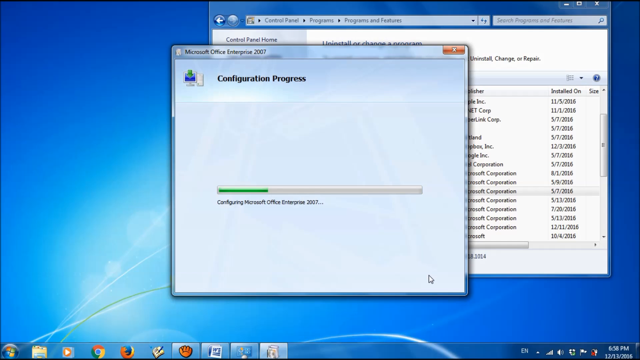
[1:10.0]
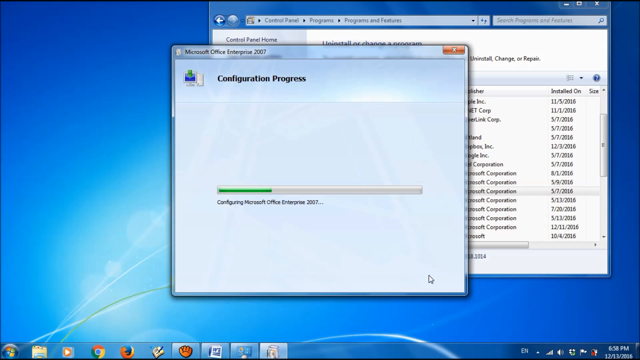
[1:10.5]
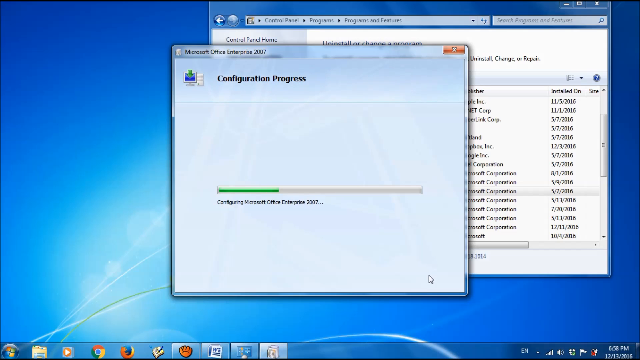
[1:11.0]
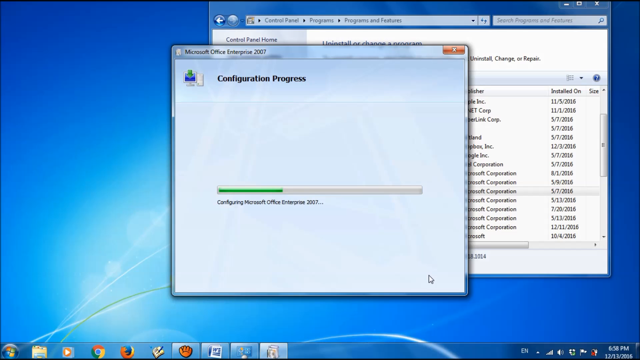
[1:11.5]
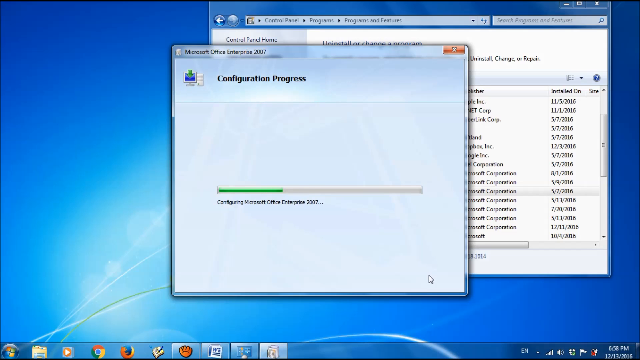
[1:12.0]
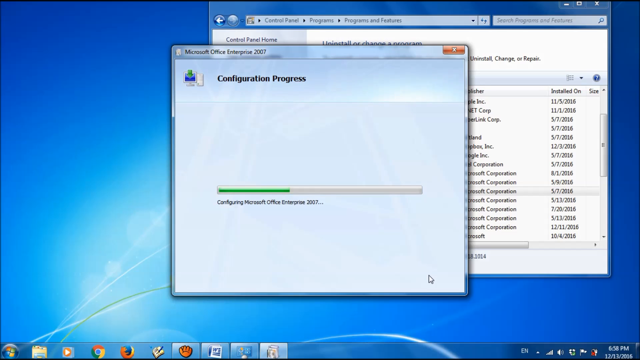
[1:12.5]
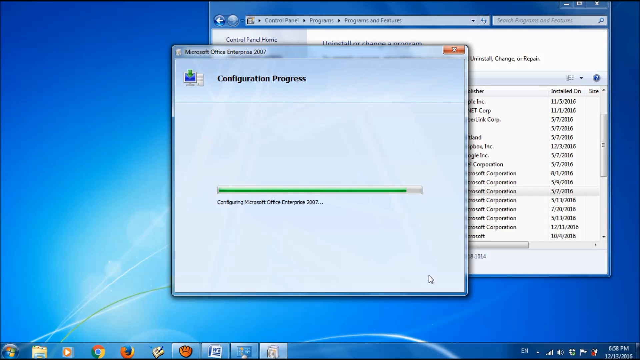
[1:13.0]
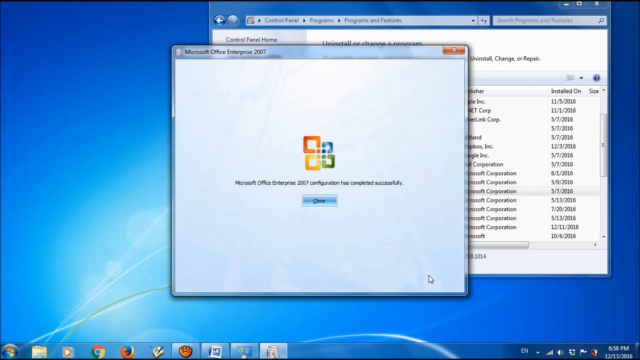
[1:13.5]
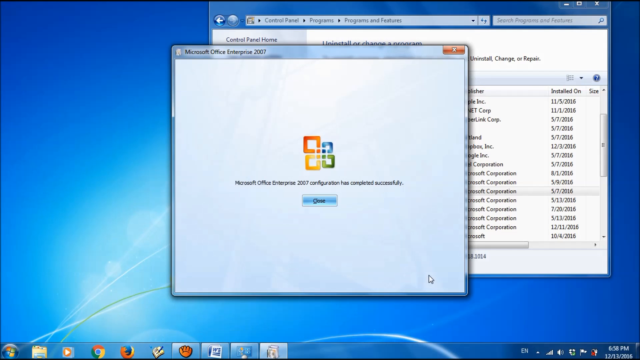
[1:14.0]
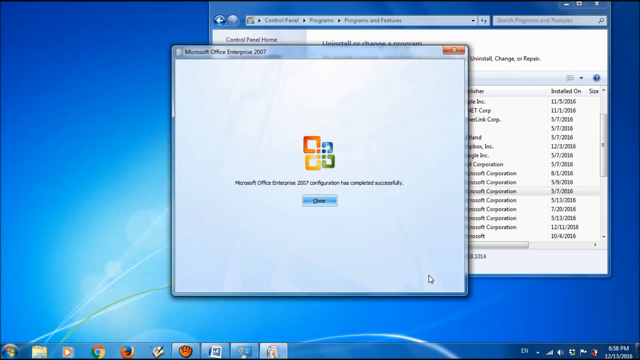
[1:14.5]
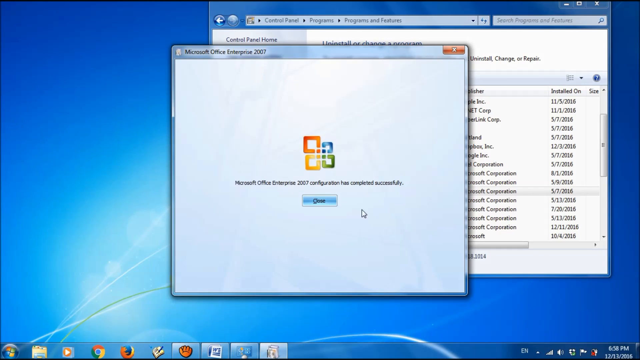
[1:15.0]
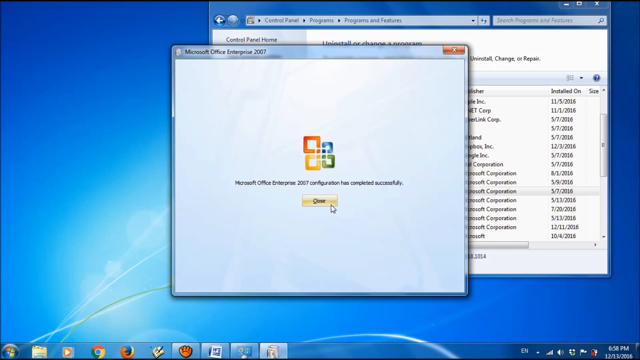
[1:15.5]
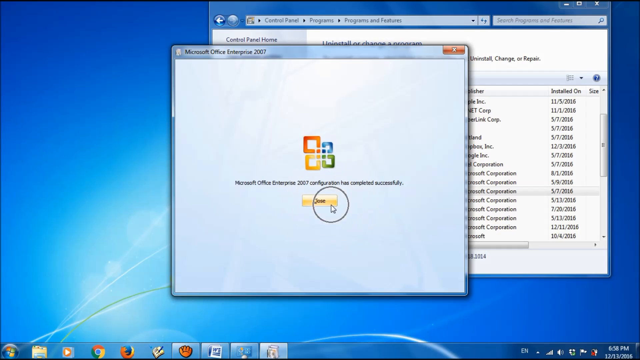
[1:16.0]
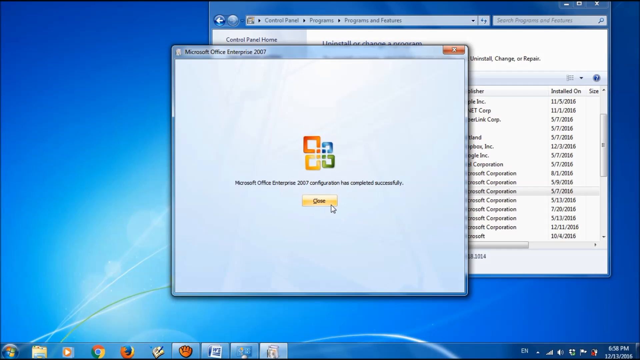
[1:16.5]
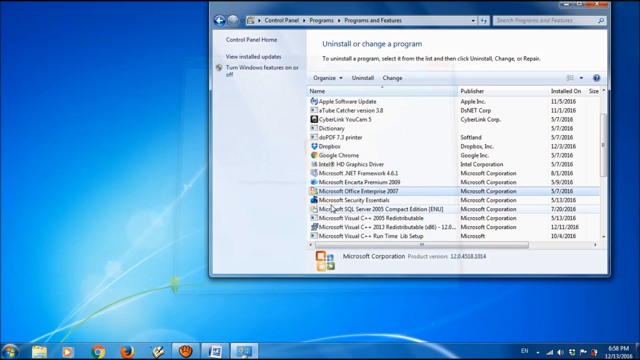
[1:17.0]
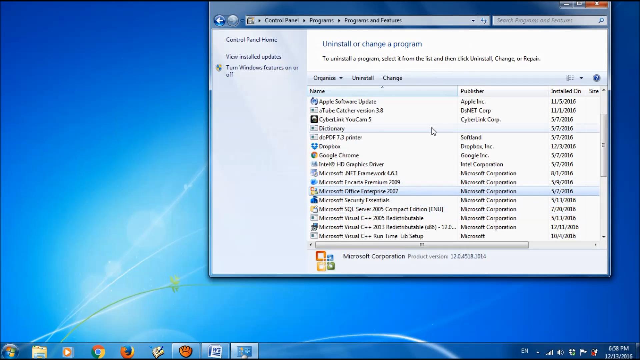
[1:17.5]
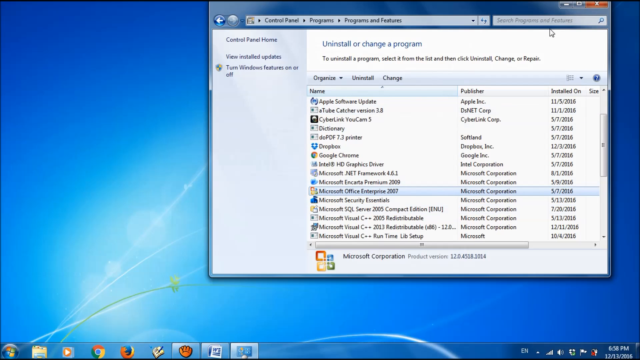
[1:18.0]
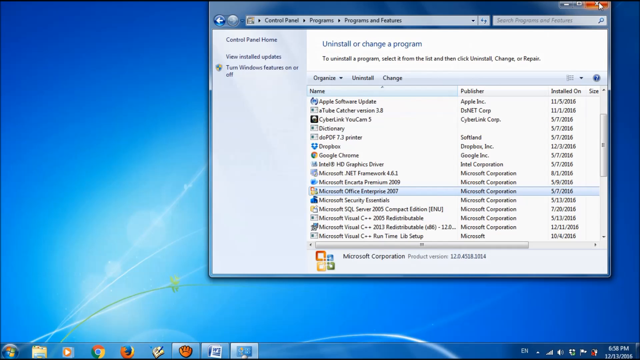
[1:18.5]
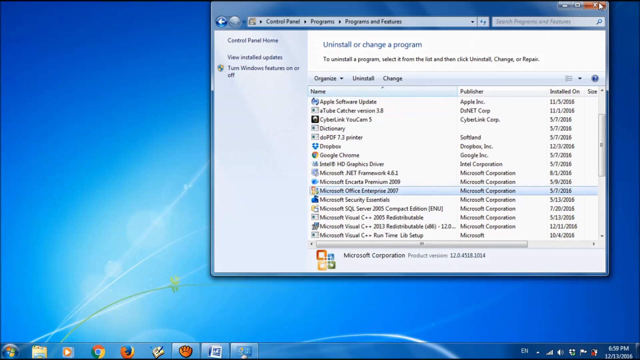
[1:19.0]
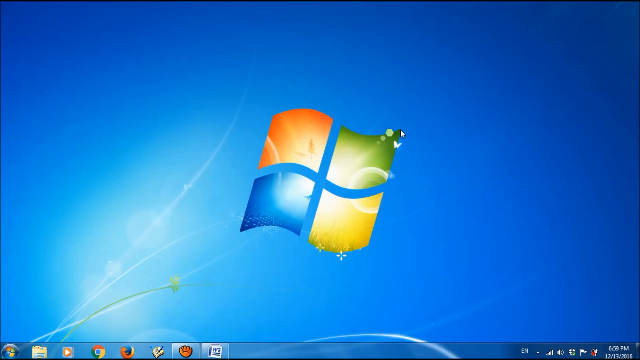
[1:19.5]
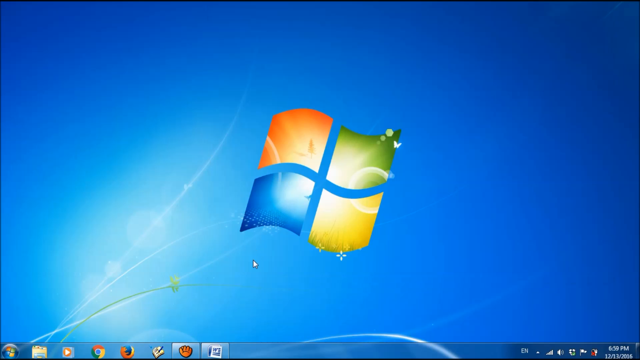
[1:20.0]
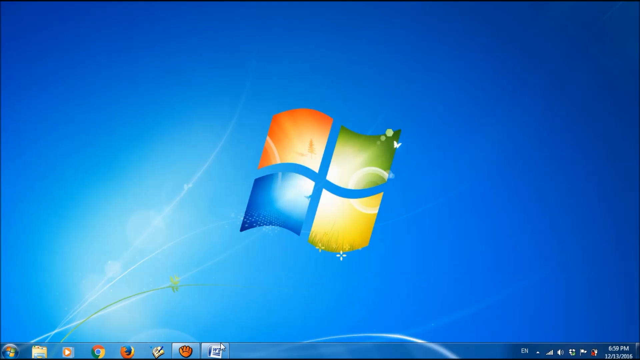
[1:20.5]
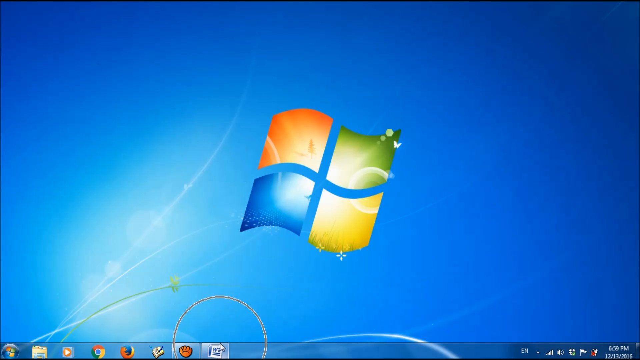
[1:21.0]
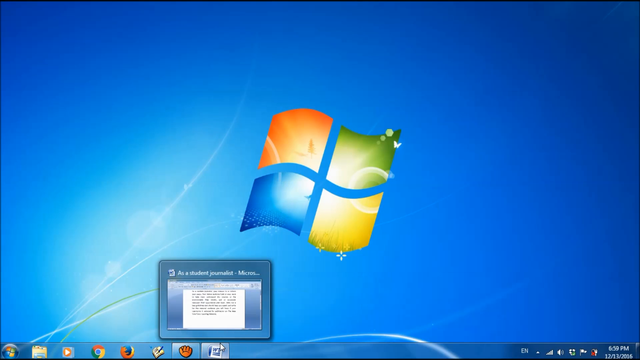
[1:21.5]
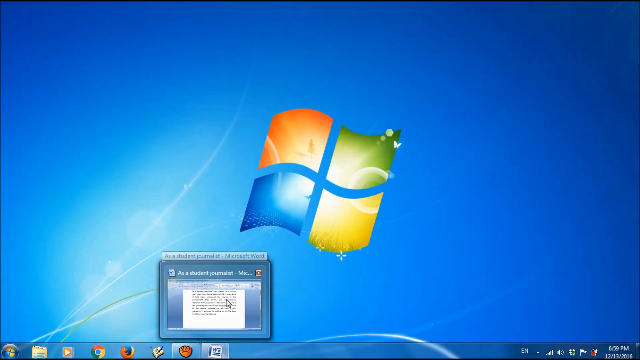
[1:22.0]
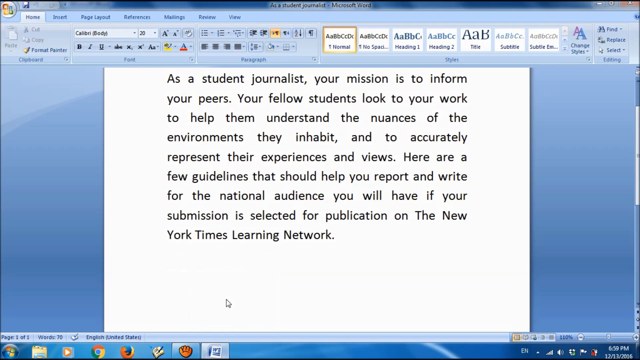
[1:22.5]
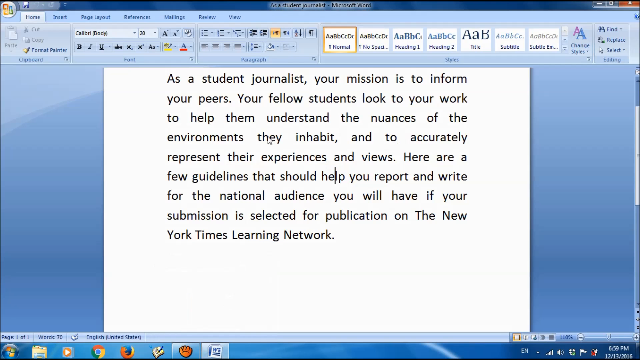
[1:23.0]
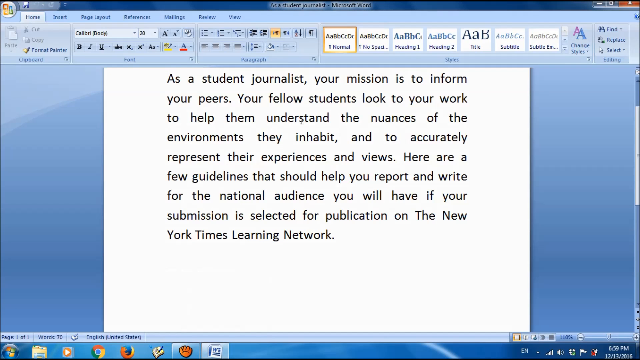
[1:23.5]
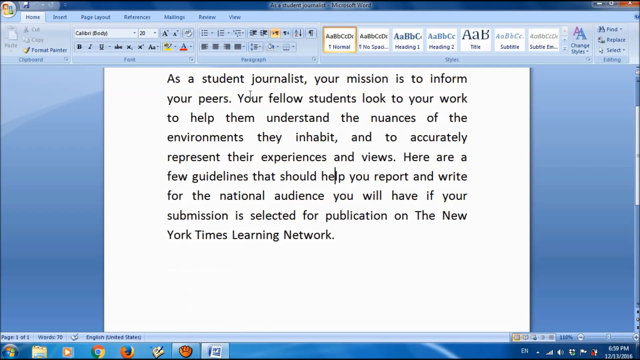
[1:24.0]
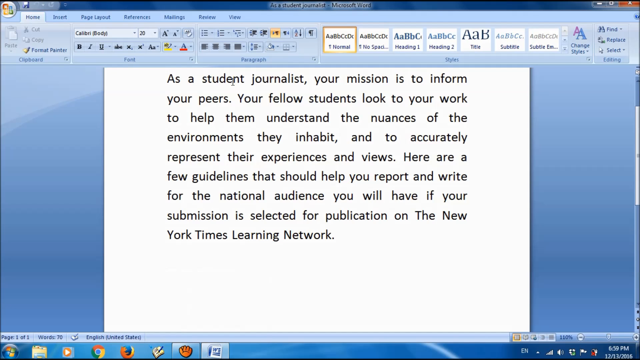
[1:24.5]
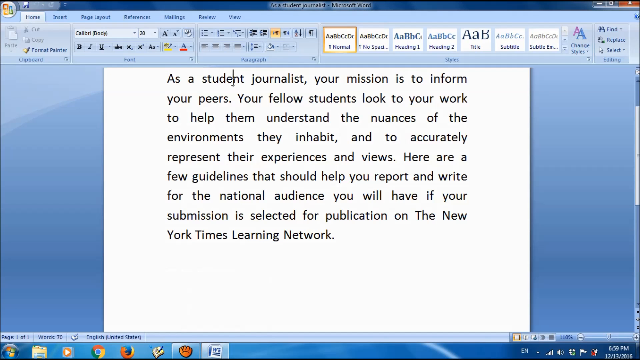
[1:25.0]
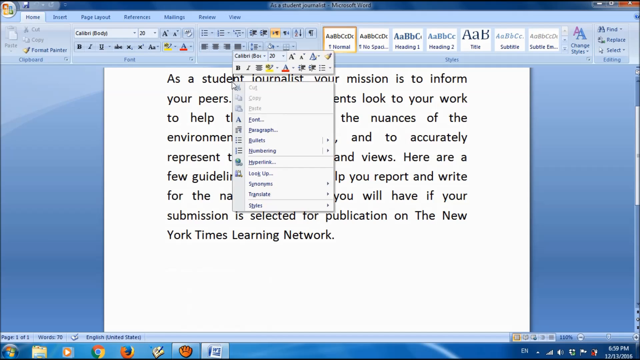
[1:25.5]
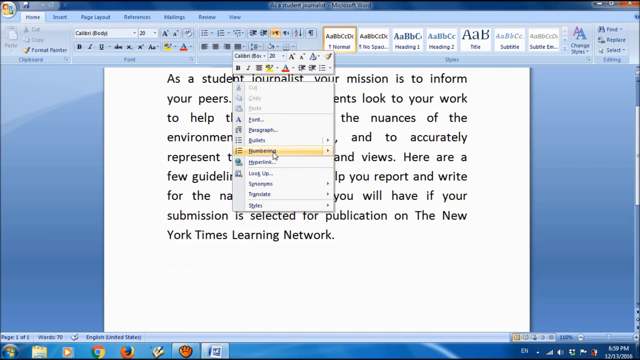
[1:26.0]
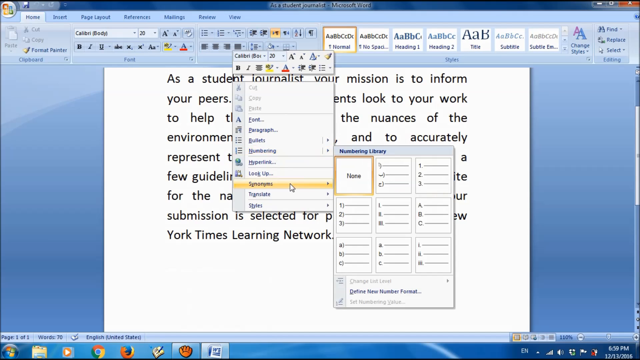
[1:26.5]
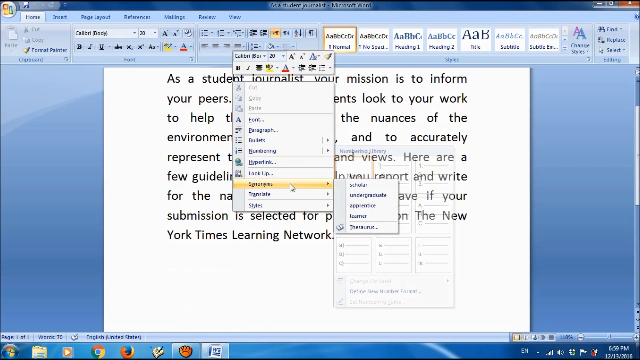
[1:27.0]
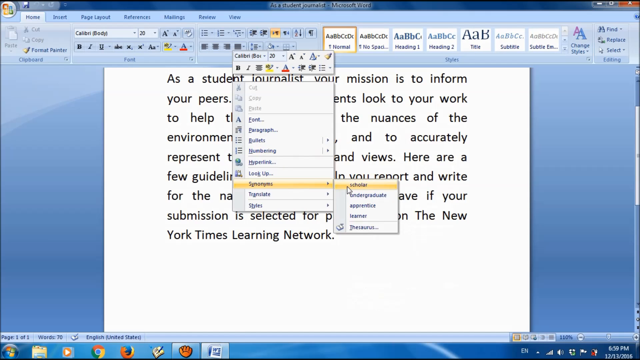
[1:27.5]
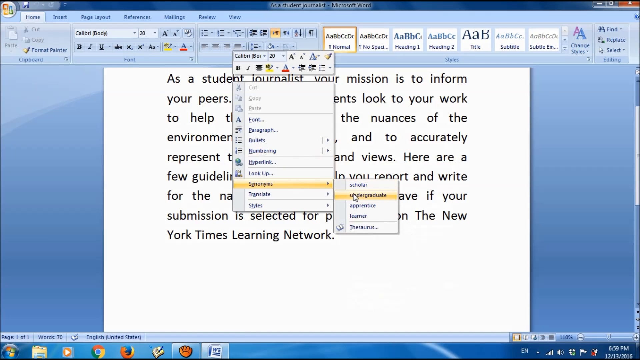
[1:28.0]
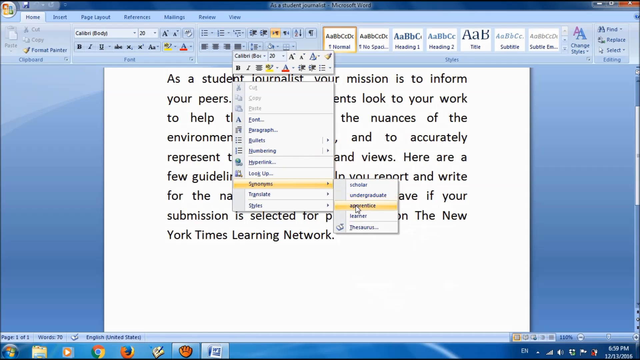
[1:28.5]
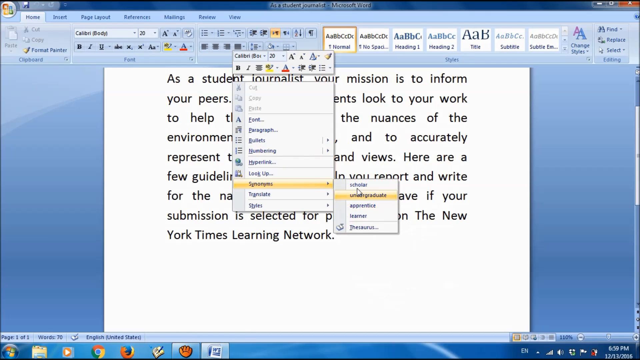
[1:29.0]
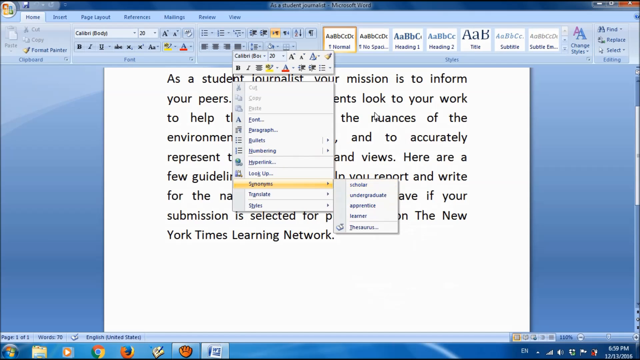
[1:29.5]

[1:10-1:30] A window pops up that says "Microsoft Office Enterprise 2007," with the headline "Configuration Progress" and a progress meter: a green bar growing wider and wider across the screen. Below it the text says "configuring Microsoft Office Enterprise 2007...". The green bar completes, and the window says "Microsoft Office Enterprise 2007 configuration has completed successfully," with a close button, which the mouse moves up to and clicks. The screen returns to the page for uninstalling or changing a program, and the cursor goes up to the red X in the upper right corner of that window and closes it. The Windows desktop with its default wallpaper of the Windows logo is back. The cursor goes down to an icon at the bottom that looks like a Microsoft Word document, and a Word document titled "As a student journalist" comes up.